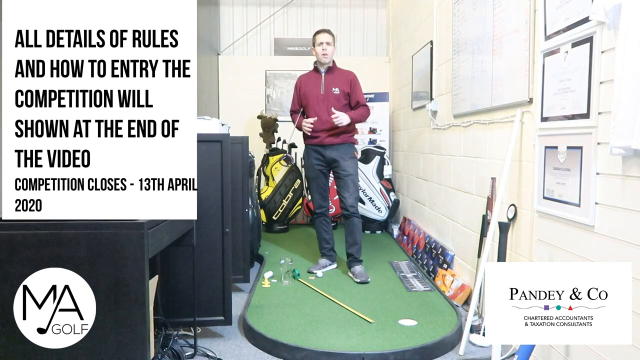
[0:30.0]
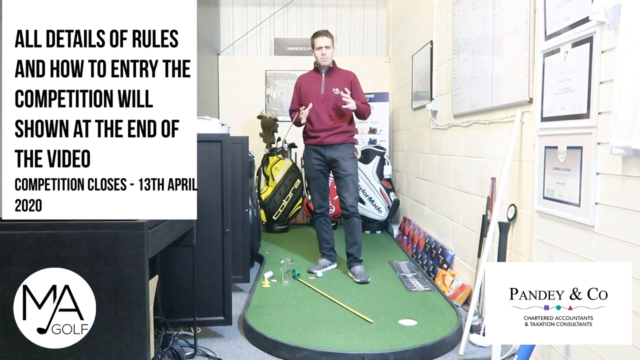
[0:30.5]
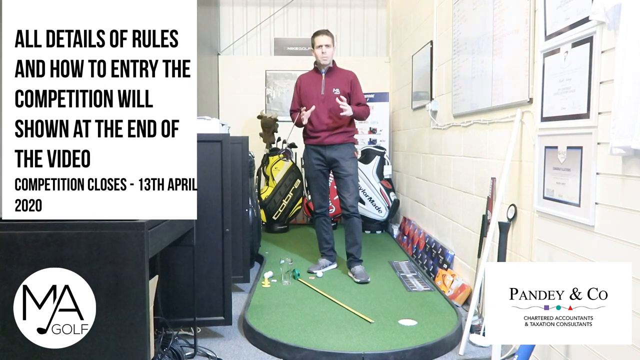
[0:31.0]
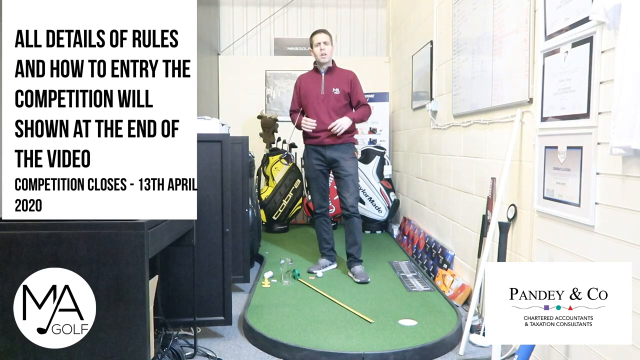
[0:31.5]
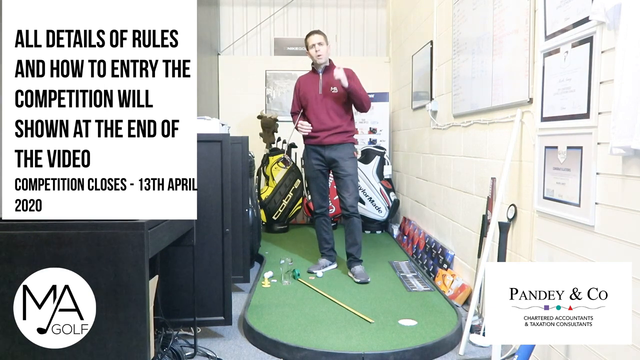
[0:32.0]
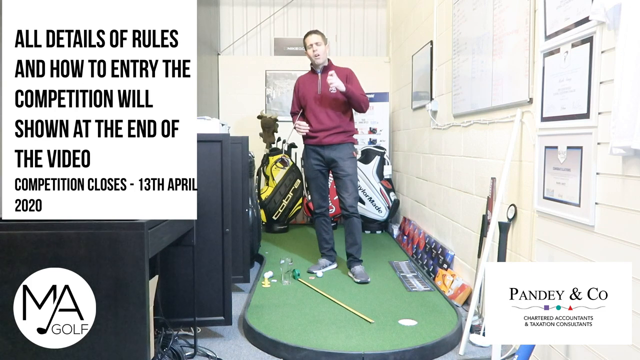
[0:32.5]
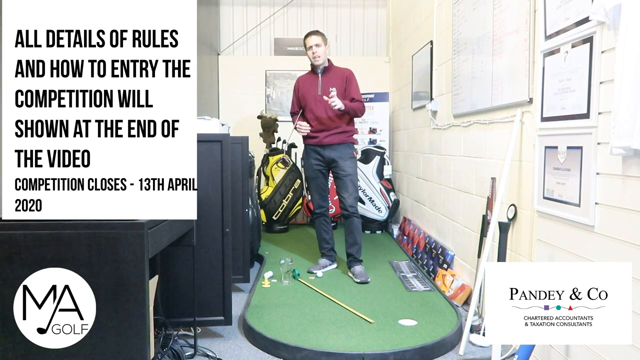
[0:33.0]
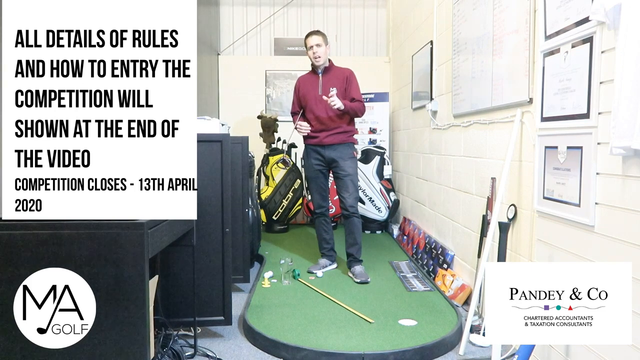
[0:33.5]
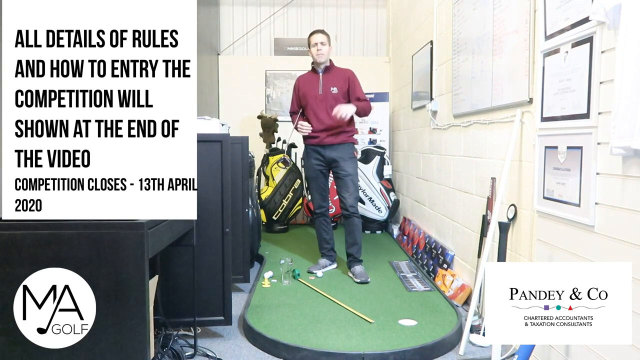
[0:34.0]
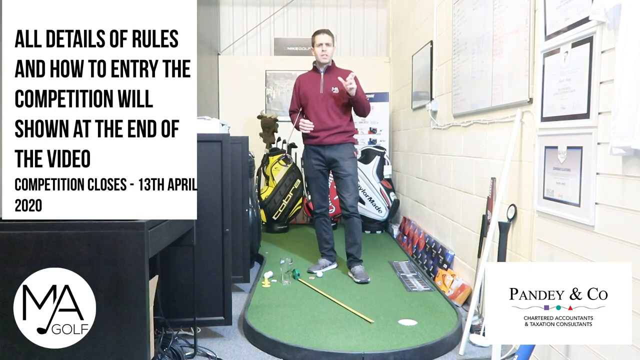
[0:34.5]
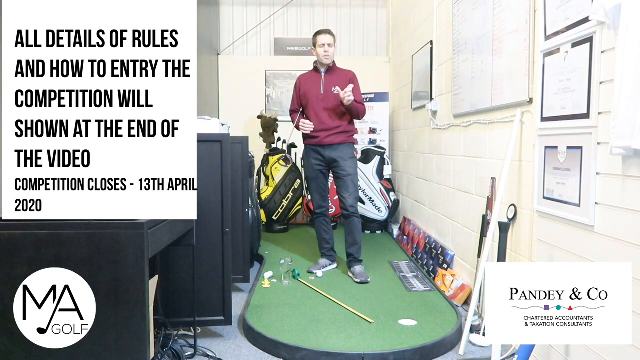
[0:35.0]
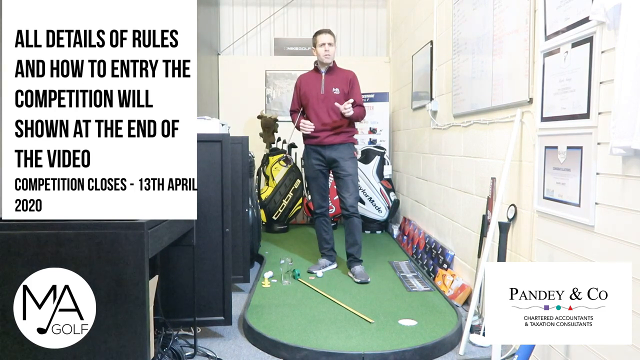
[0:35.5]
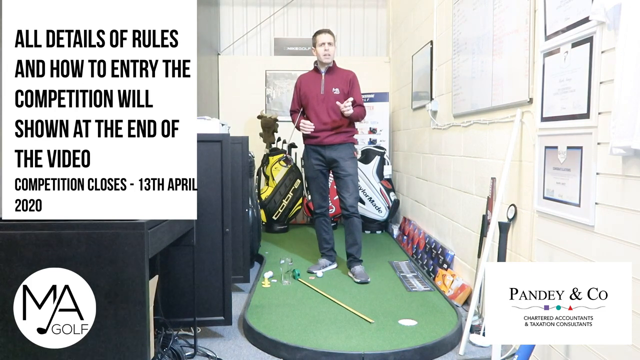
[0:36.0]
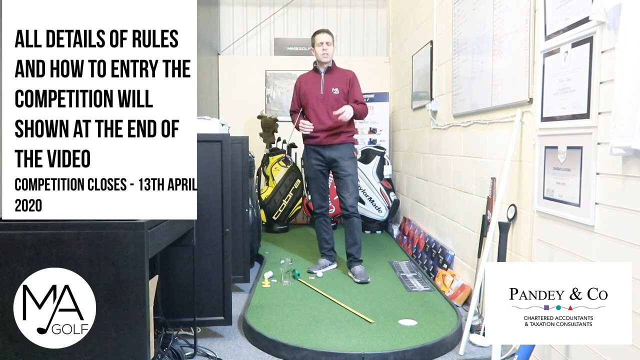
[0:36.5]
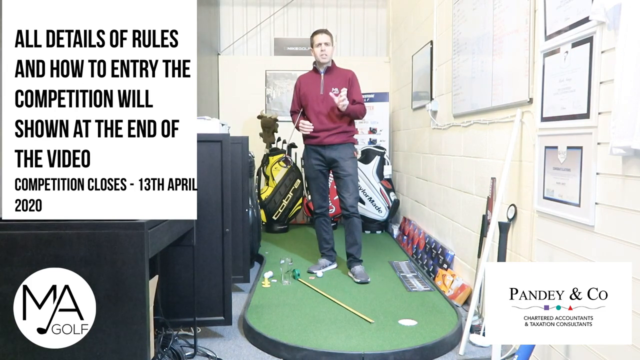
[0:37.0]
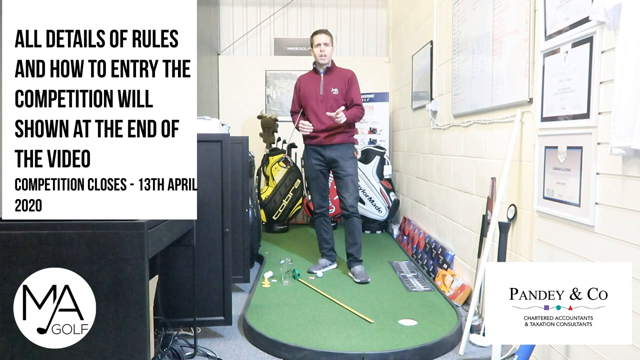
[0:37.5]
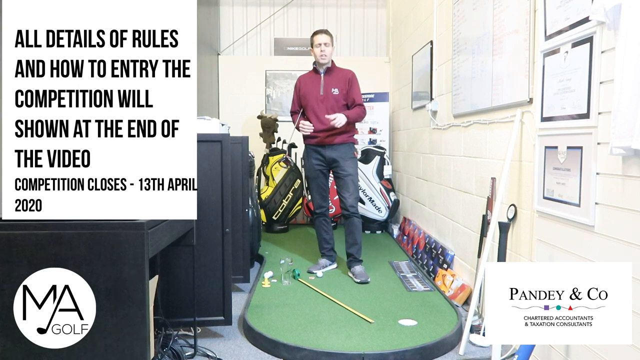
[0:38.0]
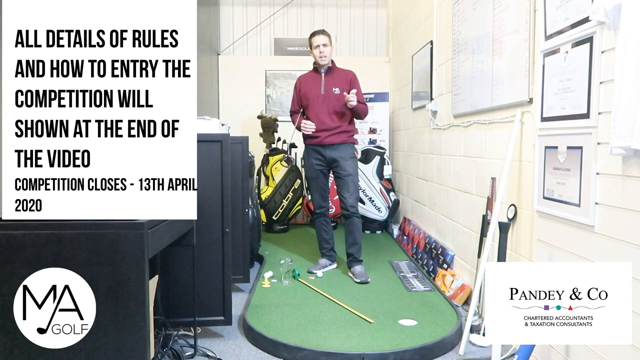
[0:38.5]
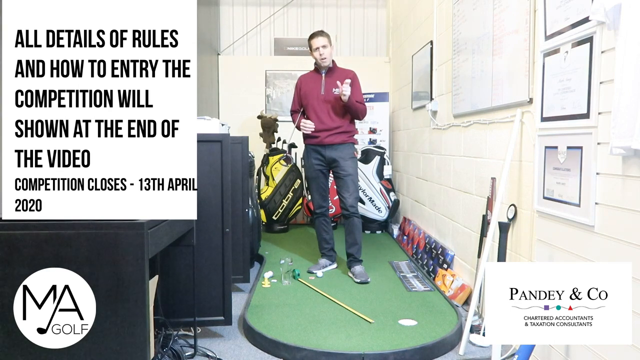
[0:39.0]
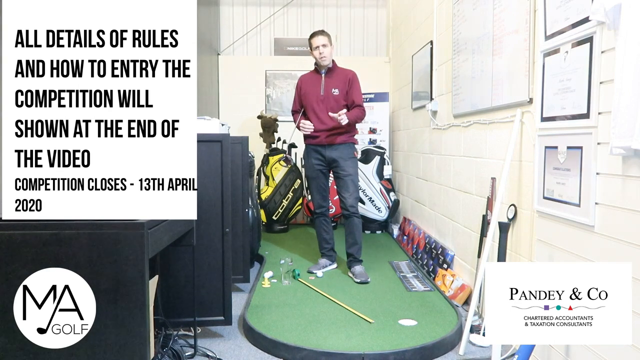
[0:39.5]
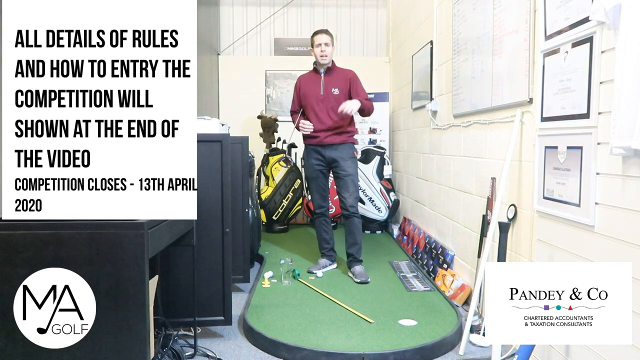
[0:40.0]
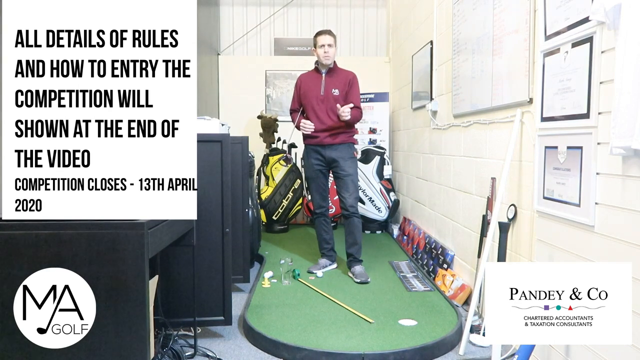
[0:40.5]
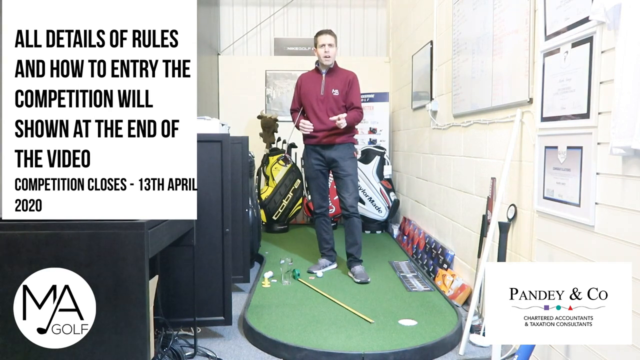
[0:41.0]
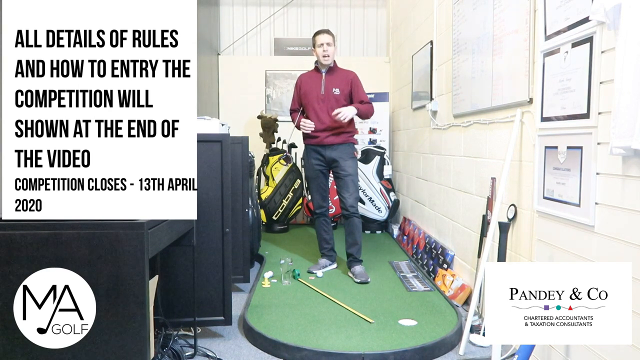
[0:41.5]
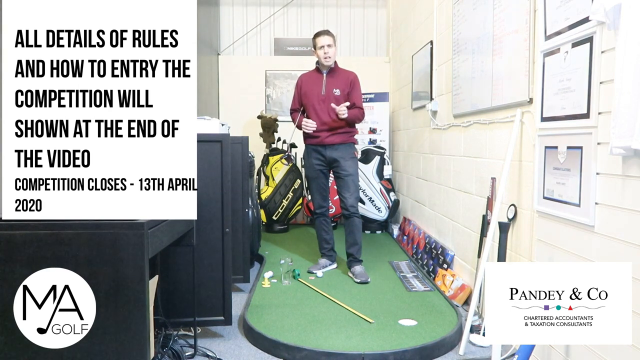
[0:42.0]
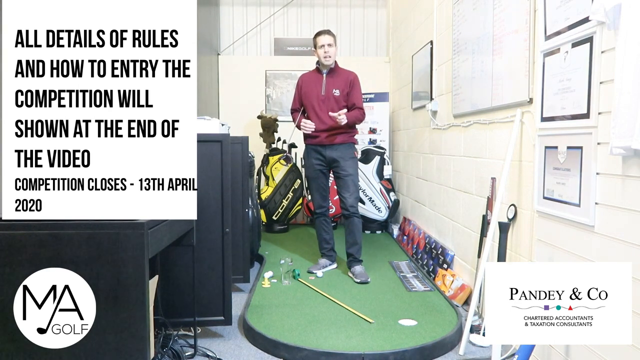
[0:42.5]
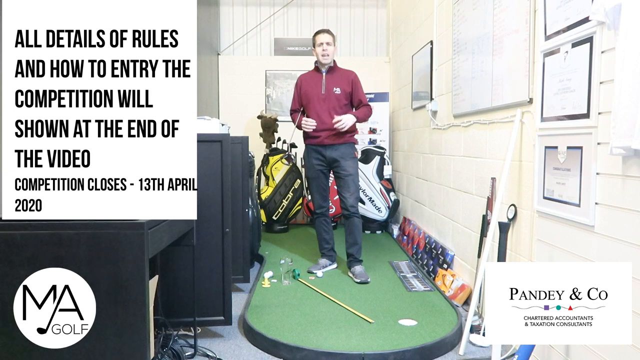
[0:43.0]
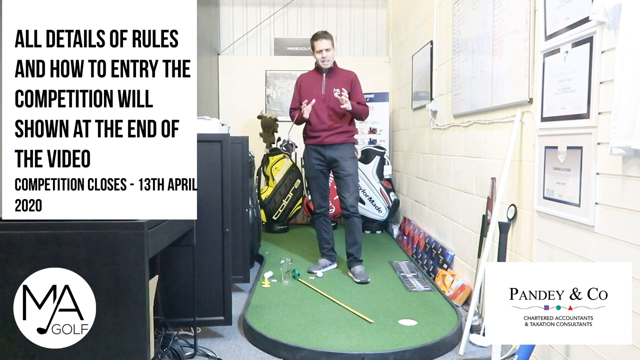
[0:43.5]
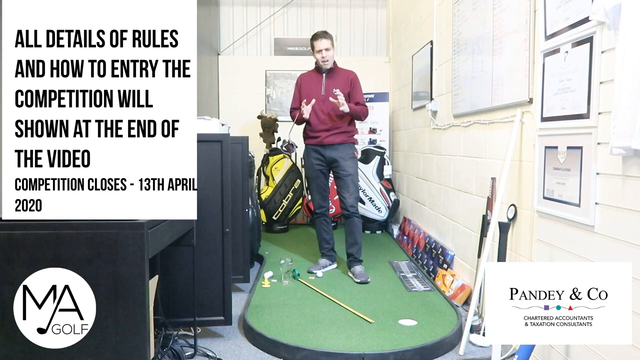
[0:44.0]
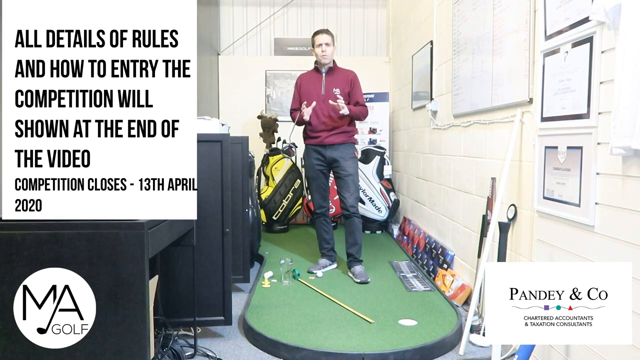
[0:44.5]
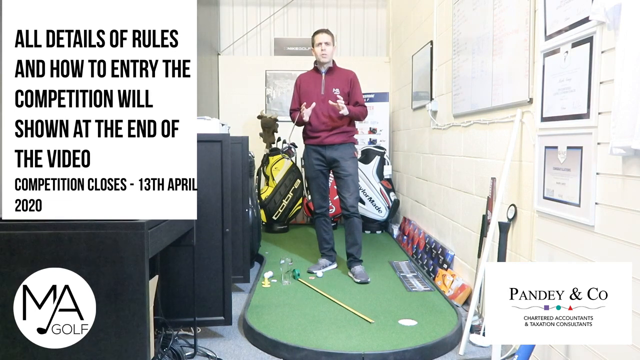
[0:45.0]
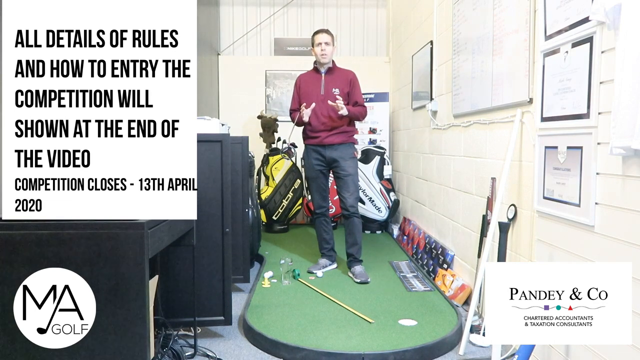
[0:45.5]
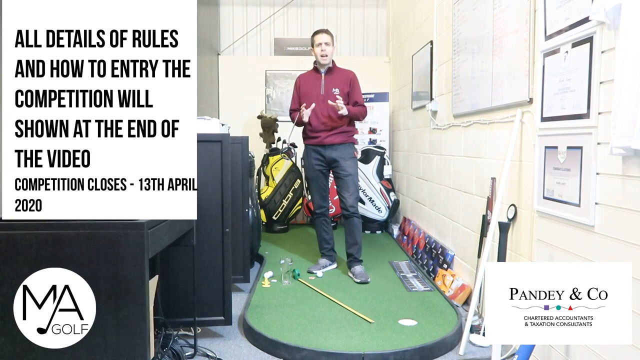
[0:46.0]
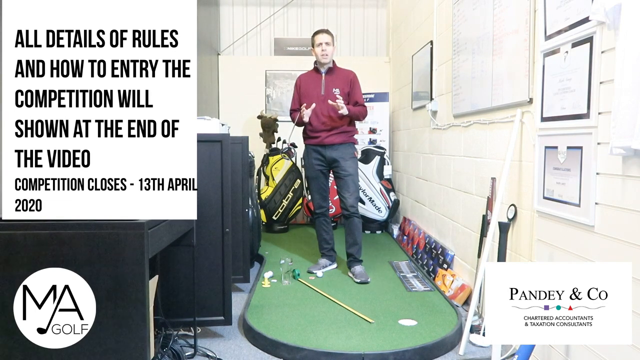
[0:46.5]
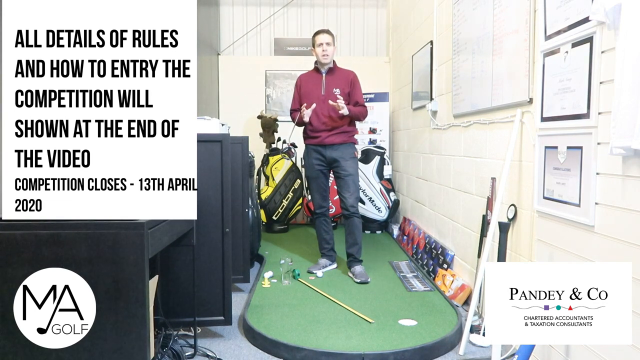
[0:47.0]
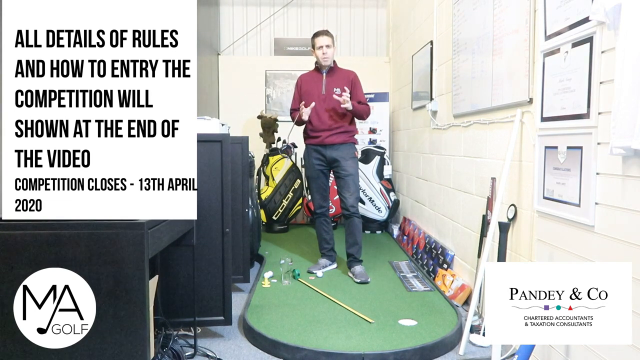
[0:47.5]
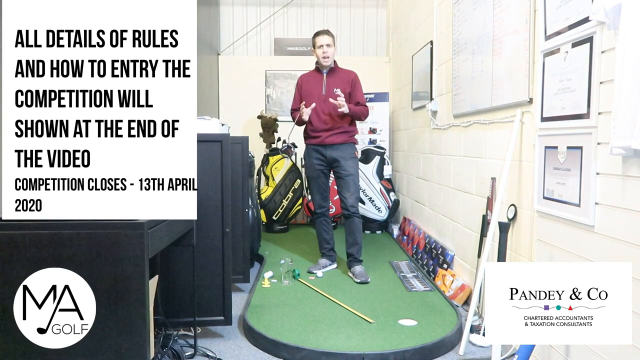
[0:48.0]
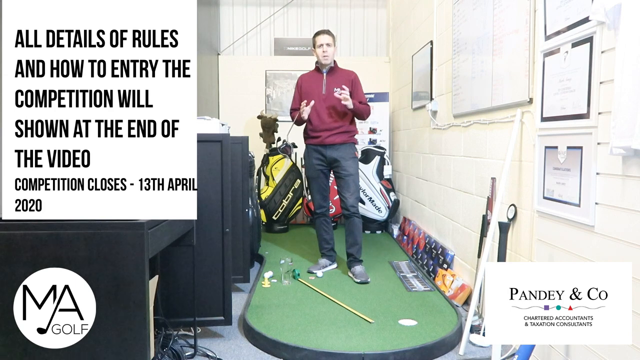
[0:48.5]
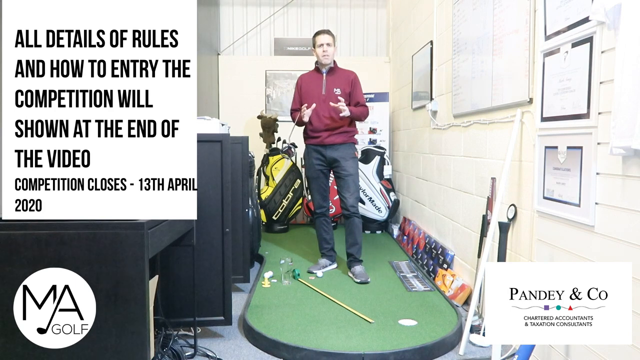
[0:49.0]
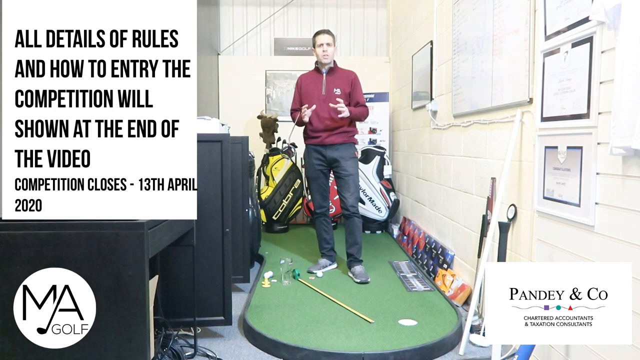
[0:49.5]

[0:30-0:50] On the wall to the left-hand side of the man are multiple framed certificates; one has a white frame and another has a black outline. There is also a whiteboard with various markings in blue and red, written with whiteboard pens. Multiple bags of golf clubs are in the background: a yellow bag with Cobra branding that has golf clubs in it, a white bag full of golf clubs whose full name is hidden because the man is standing in the way, and a red bag directly behind him. To his right are some black cupboards, all with their black doors open. On the ground, a tape measure runs from about where his right foot is to the hole at the end of the mat.